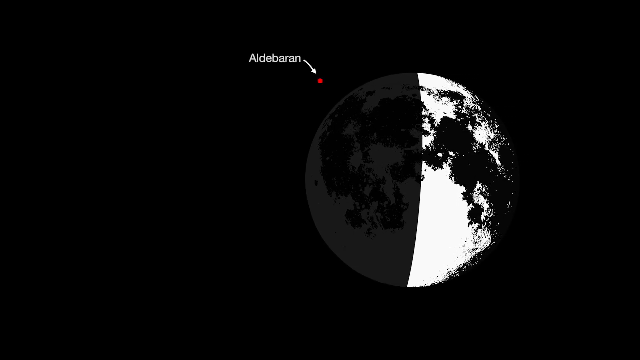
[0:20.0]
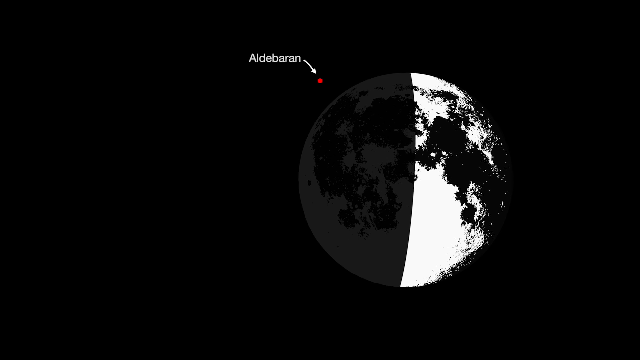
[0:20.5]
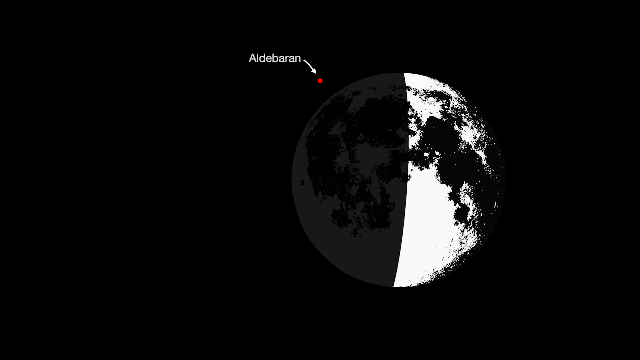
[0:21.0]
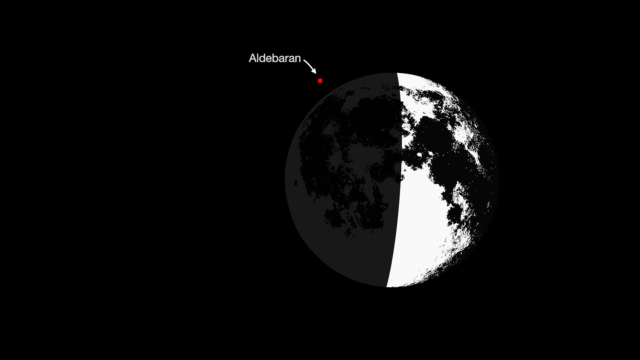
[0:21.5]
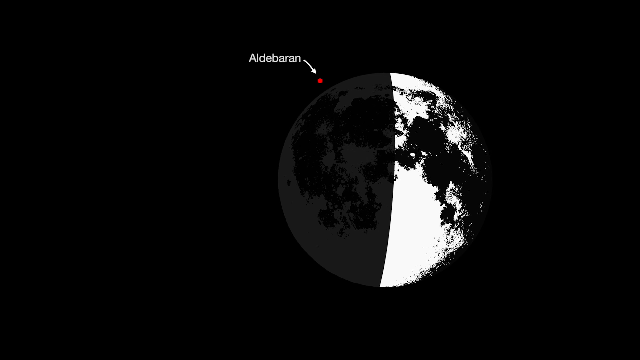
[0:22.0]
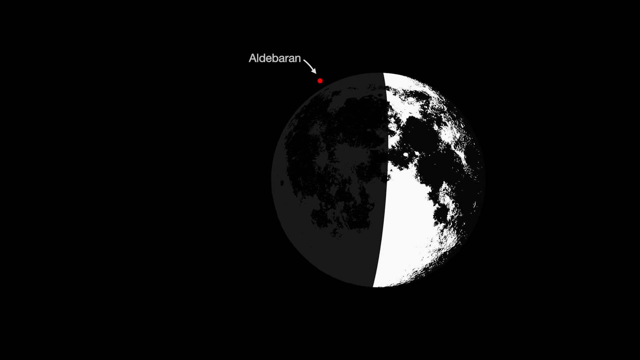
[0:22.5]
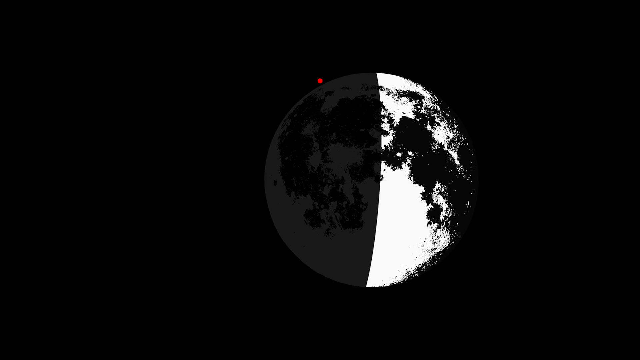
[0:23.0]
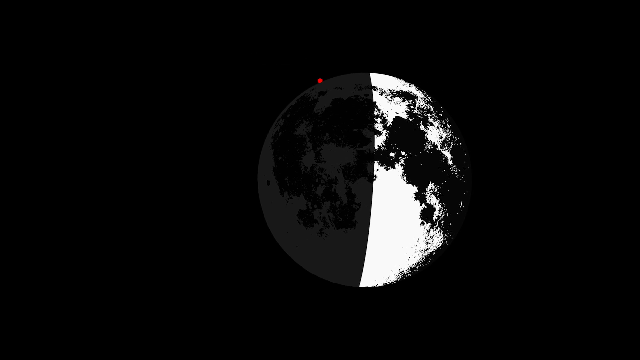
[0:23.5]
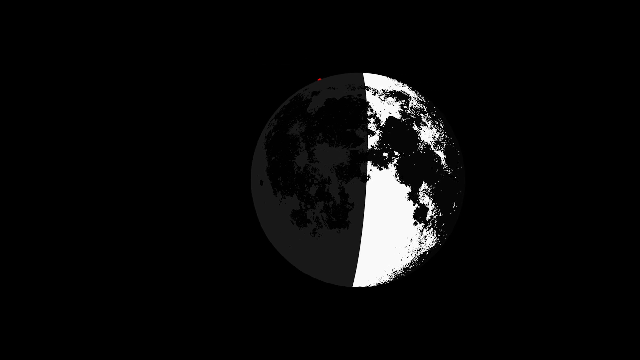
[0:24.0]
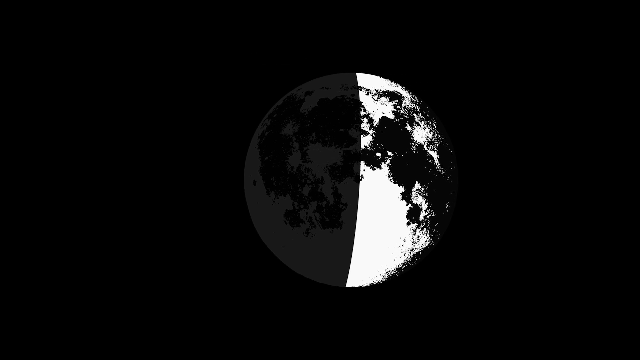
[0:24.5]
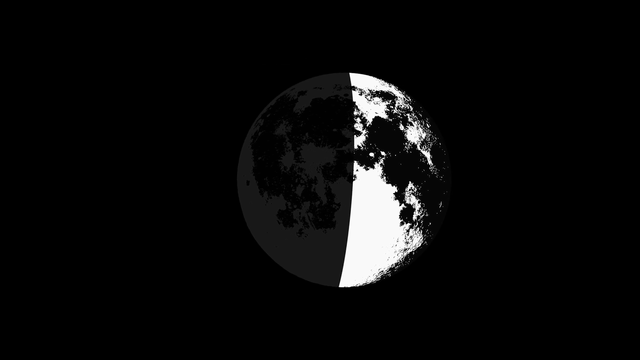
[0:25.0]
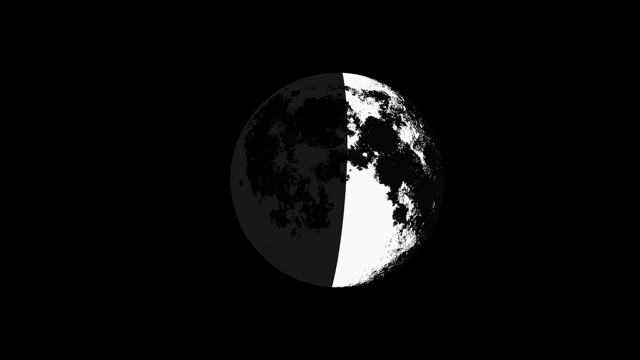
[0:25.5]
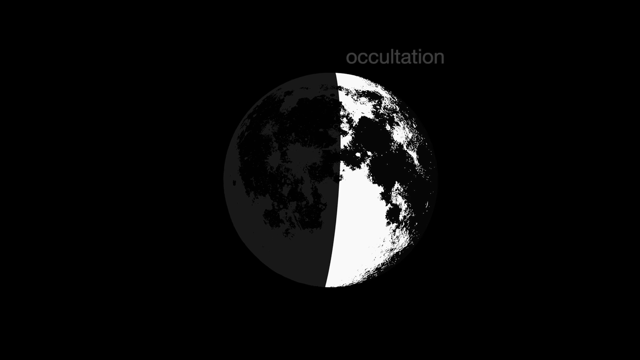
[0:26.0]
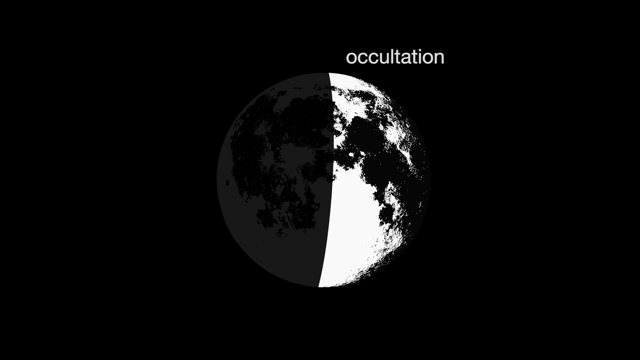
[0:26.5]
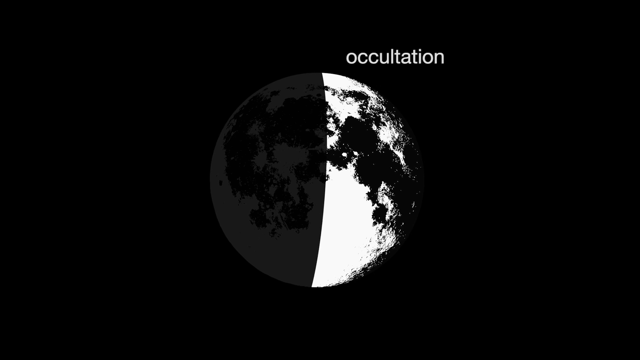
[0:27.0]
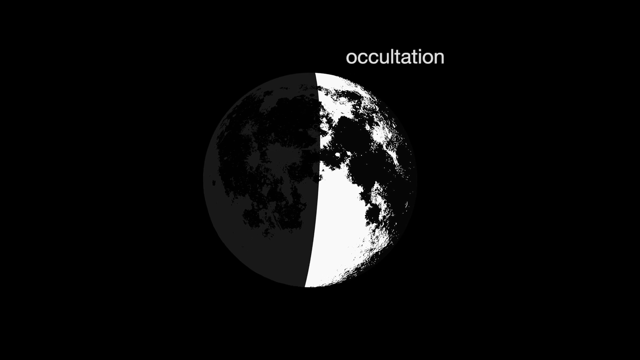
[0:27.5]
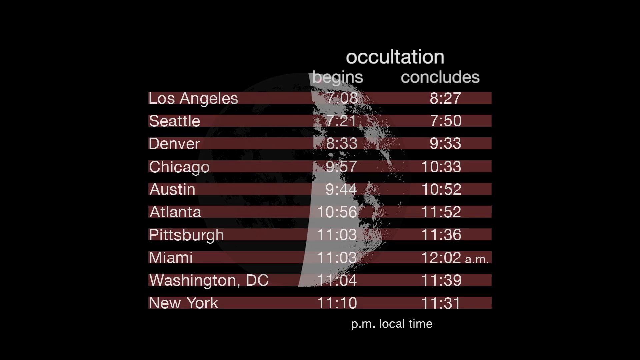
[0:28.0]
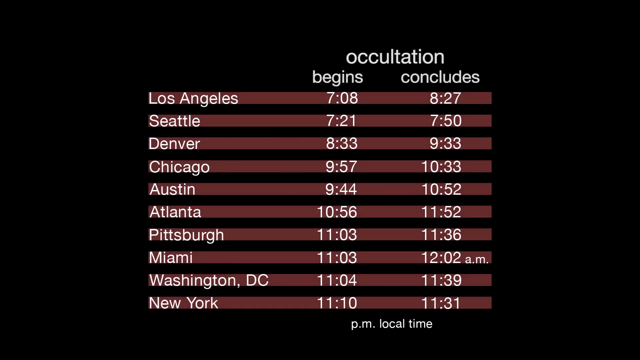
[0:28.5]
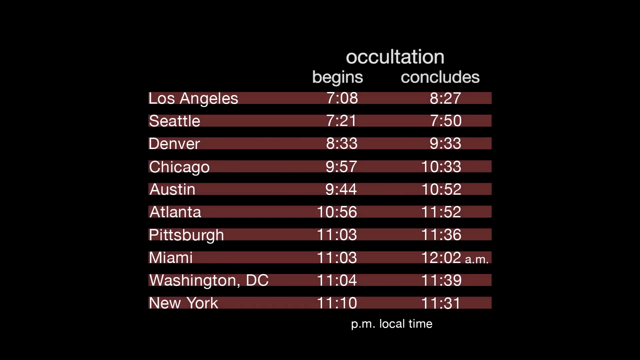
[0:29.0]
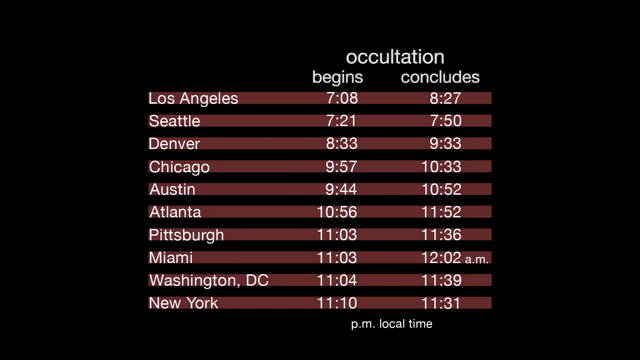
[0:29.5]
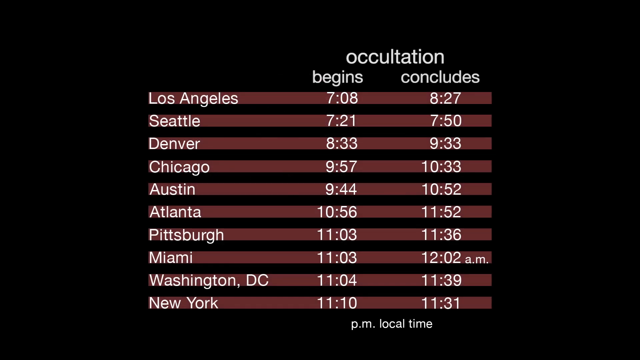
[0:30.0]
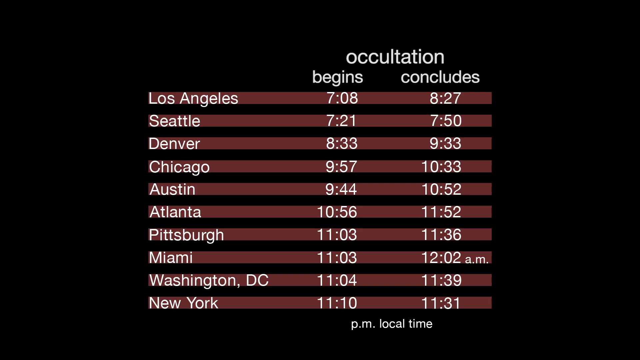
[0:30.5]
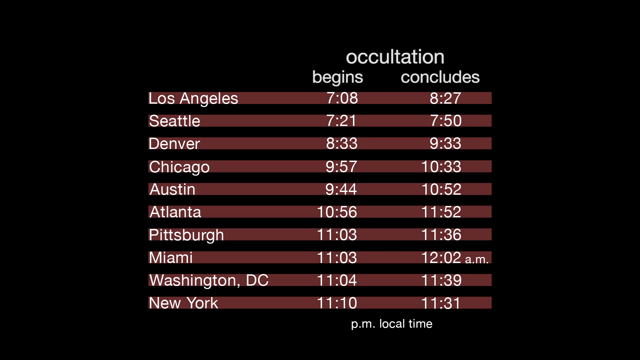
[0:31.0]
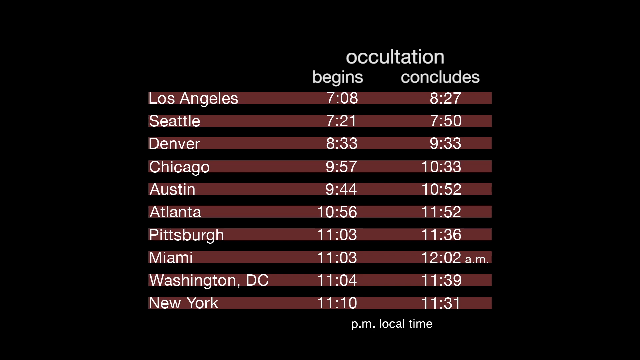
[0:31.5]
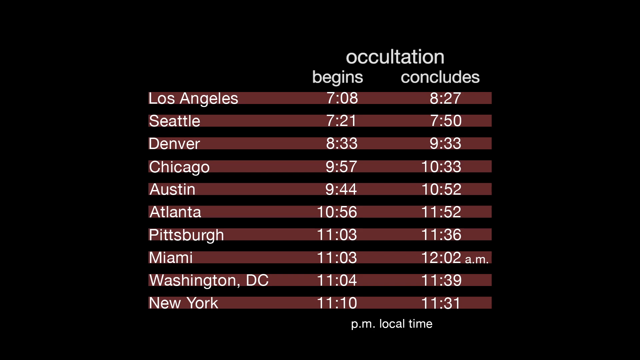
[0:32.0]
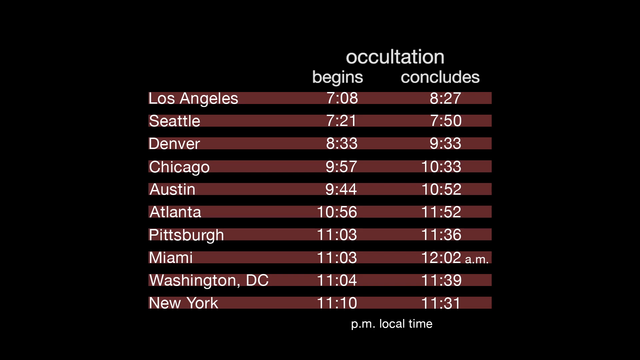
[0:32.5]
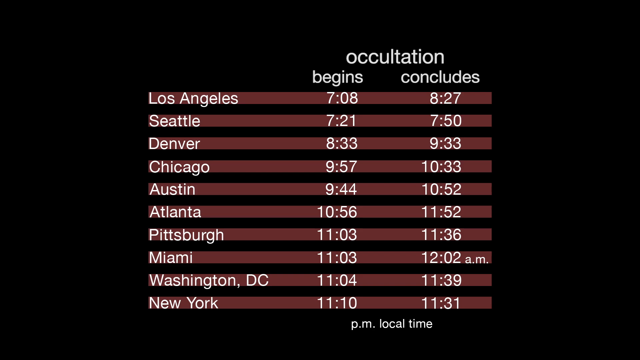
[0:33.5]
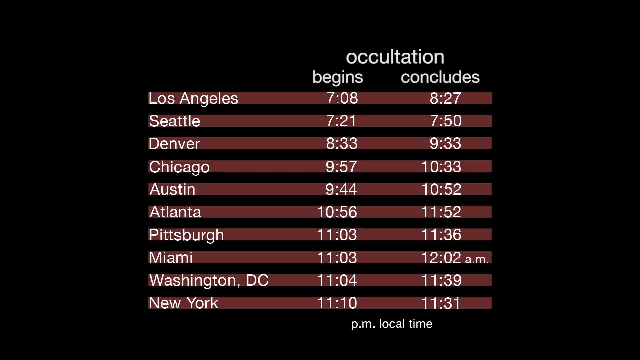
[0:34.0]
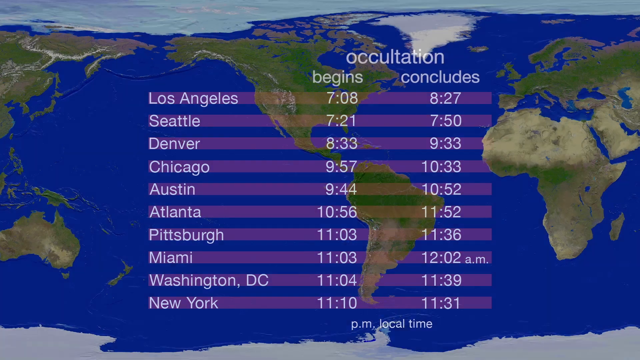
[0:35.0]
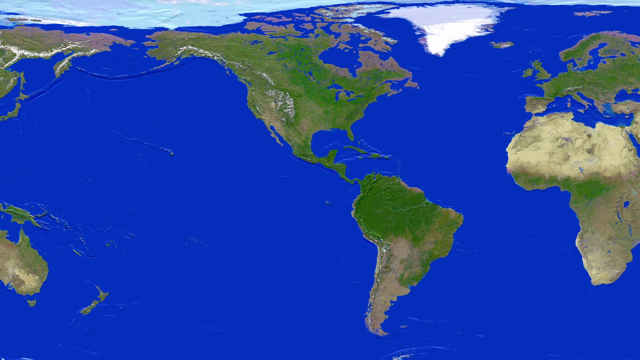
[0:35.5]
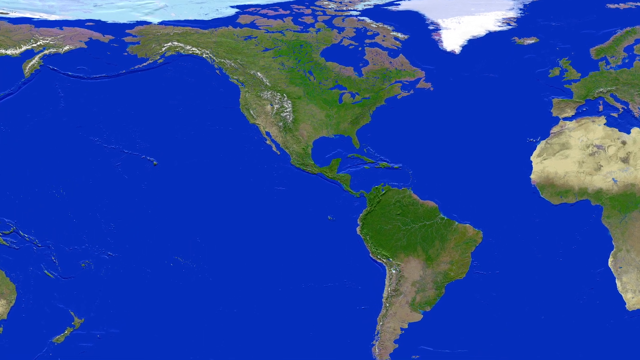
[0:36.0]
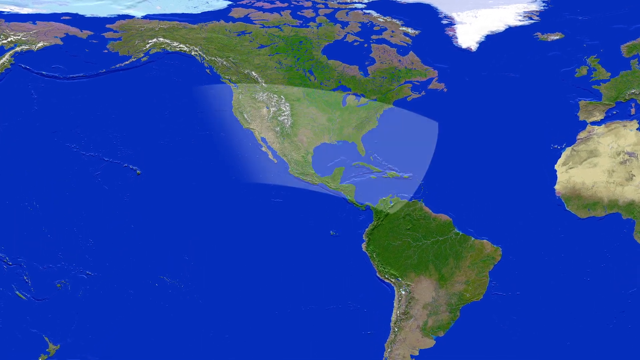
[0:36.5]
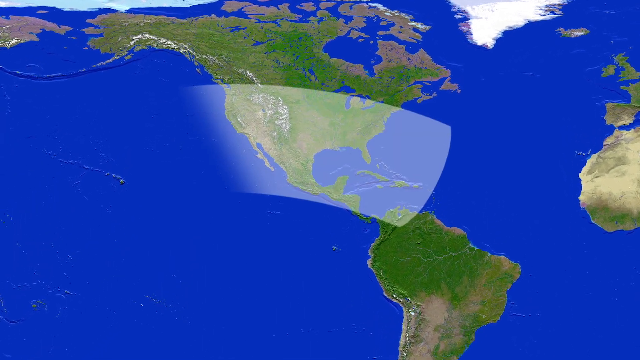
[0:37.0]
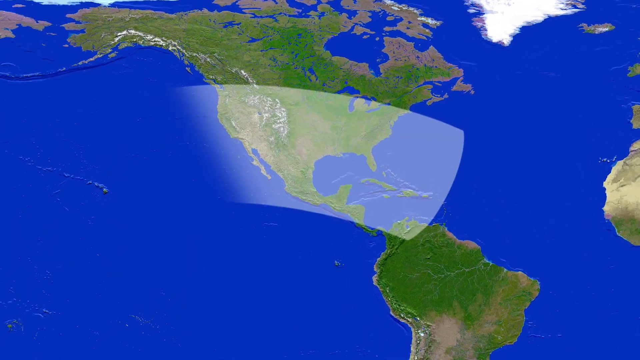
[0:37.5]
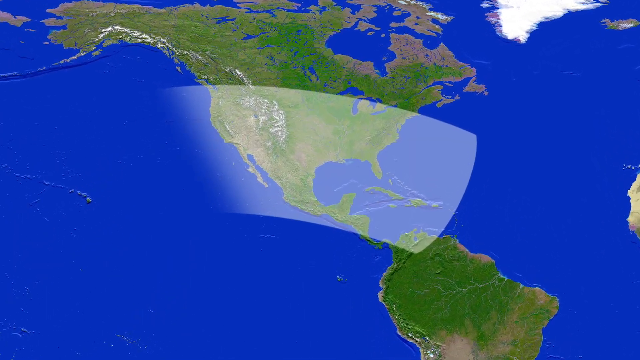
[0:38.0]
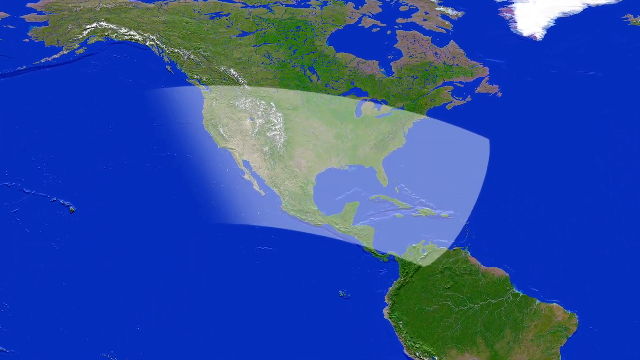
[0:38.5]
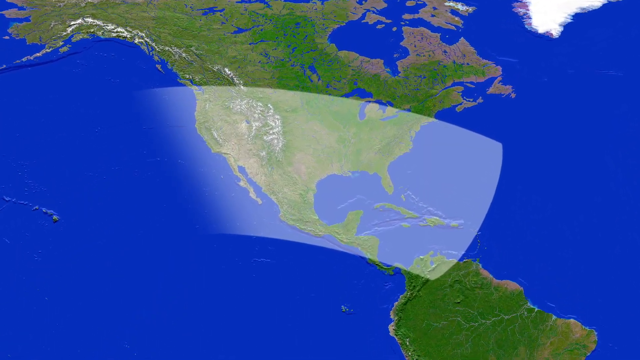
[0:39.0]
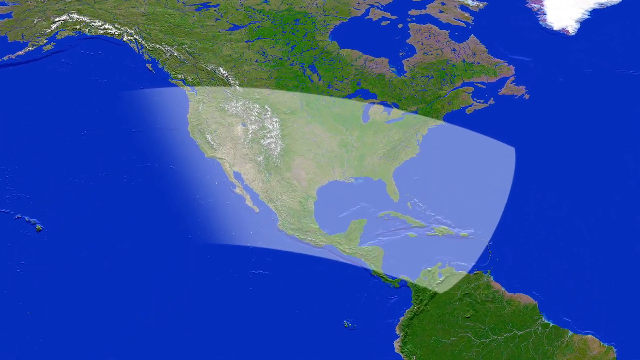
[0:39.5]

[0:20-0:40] A slide shows the occultation for different cities, with its beginning and ending at various times for each city. Some areas are covered in darkness and others in light. The cities shown include Los Angeles, Seattle, Denver, Chicago and Austin, among others.